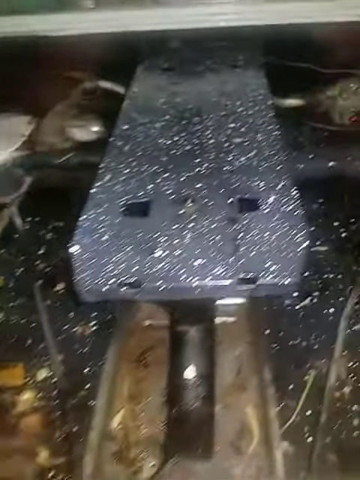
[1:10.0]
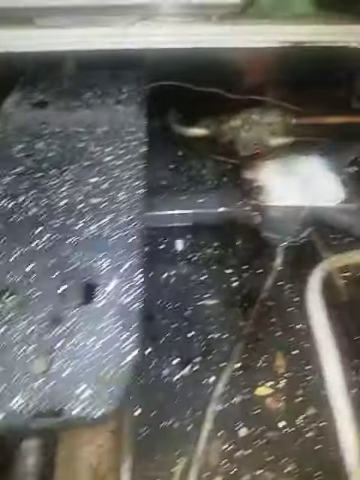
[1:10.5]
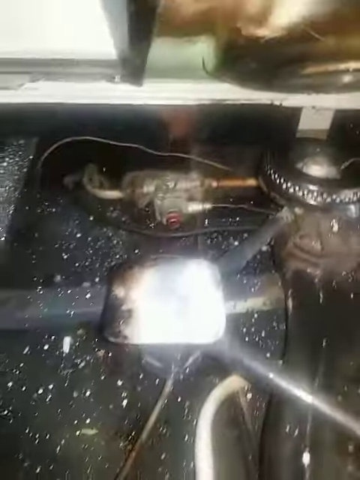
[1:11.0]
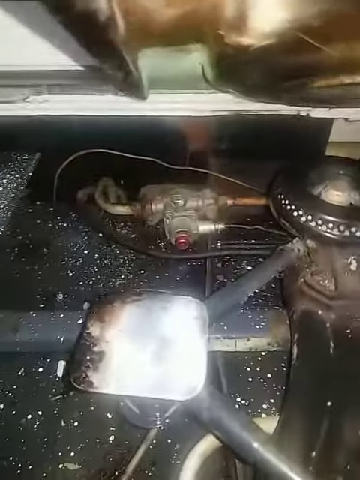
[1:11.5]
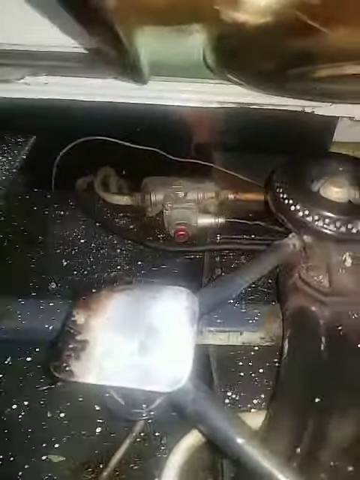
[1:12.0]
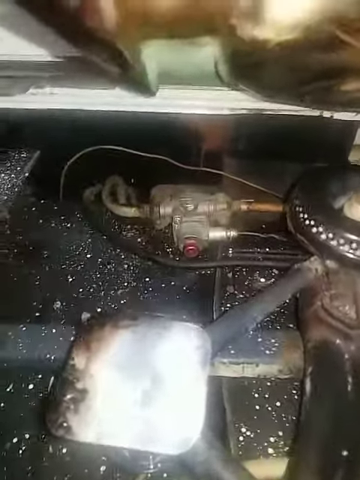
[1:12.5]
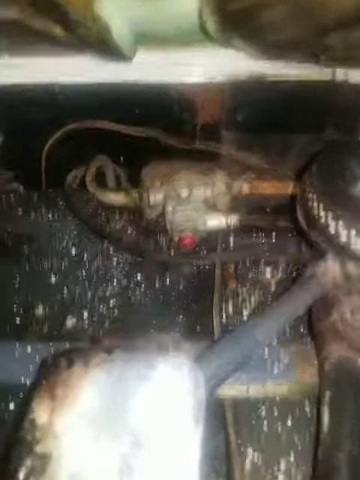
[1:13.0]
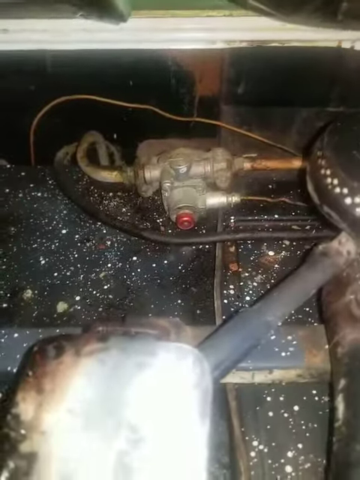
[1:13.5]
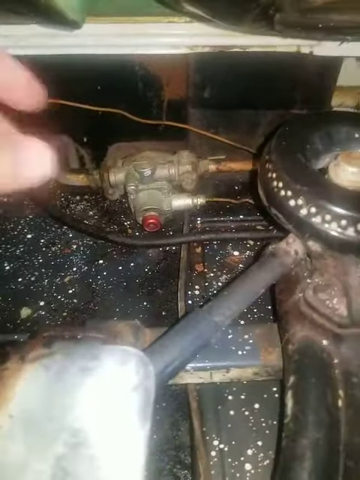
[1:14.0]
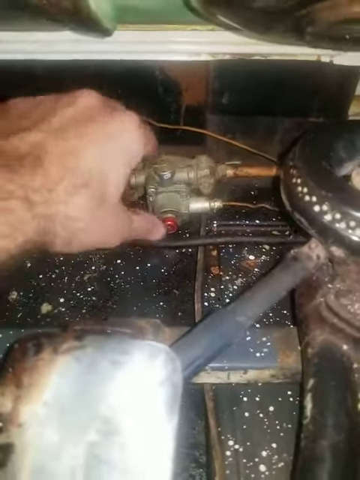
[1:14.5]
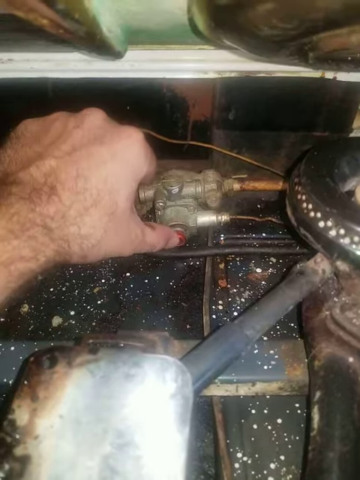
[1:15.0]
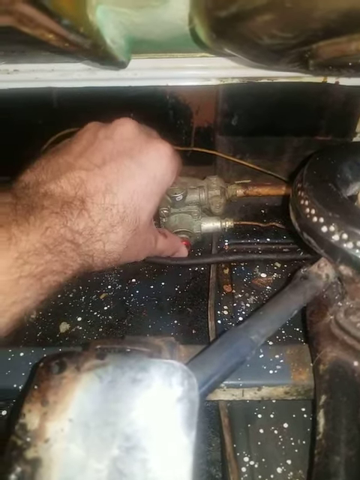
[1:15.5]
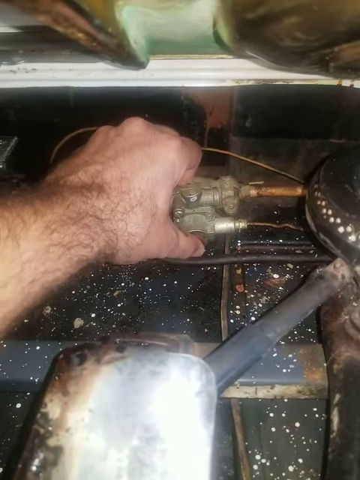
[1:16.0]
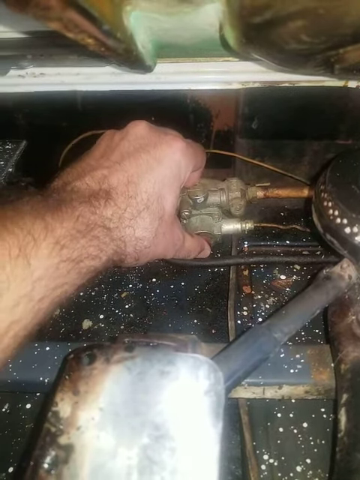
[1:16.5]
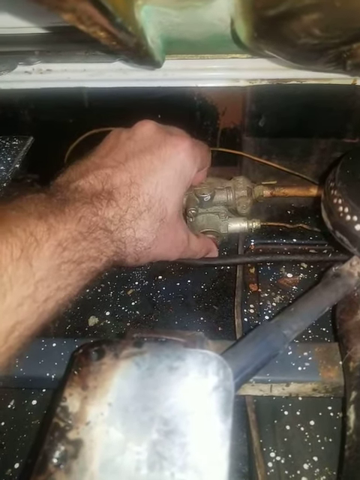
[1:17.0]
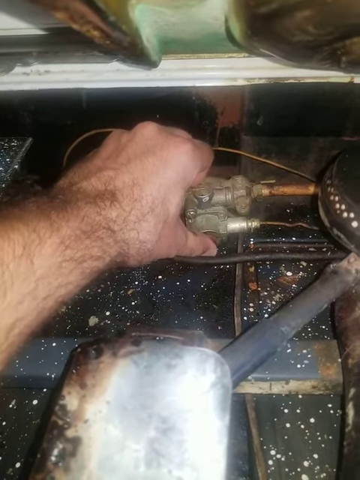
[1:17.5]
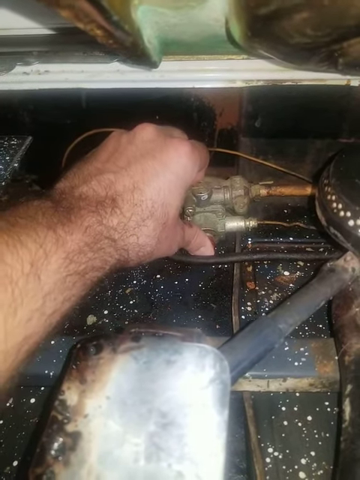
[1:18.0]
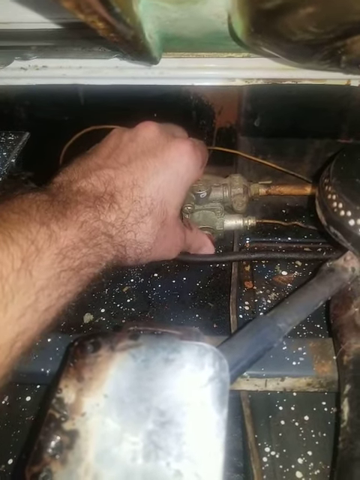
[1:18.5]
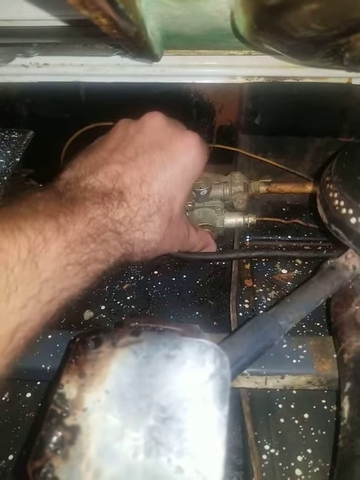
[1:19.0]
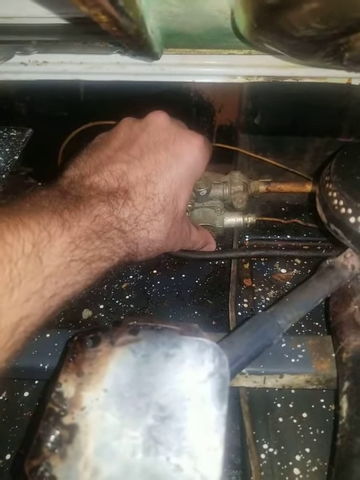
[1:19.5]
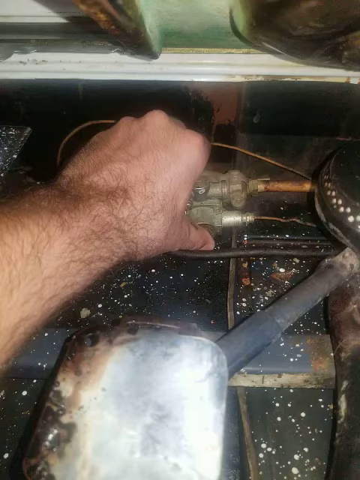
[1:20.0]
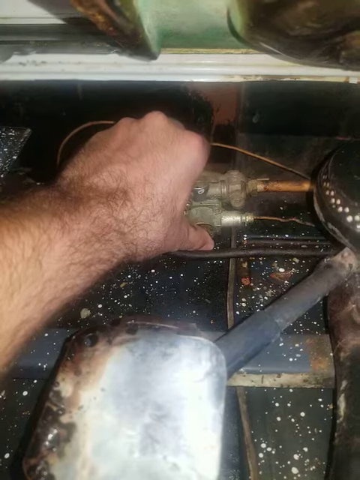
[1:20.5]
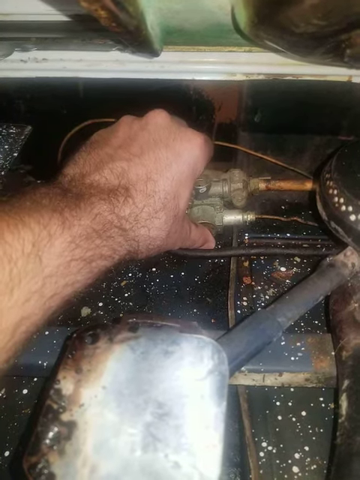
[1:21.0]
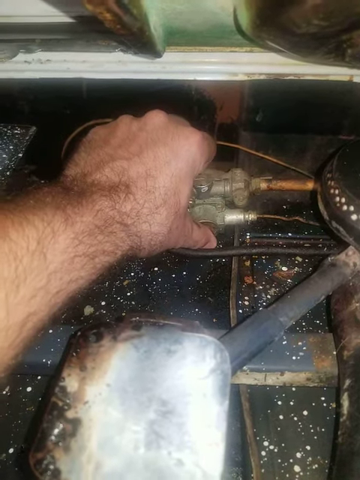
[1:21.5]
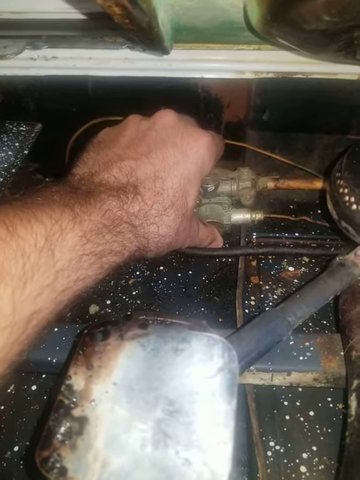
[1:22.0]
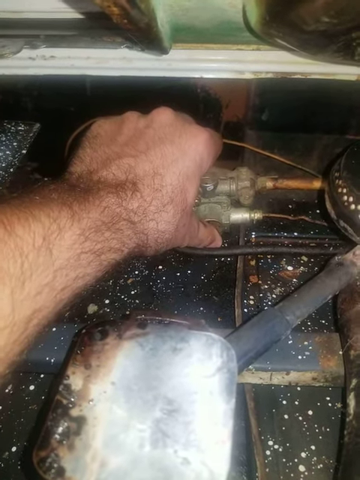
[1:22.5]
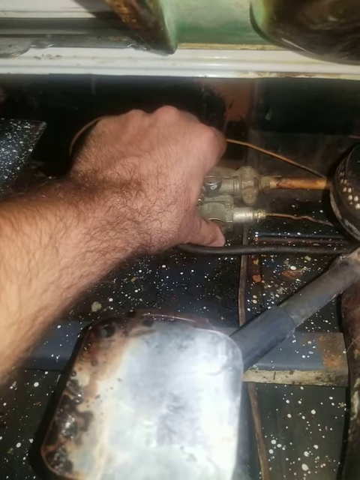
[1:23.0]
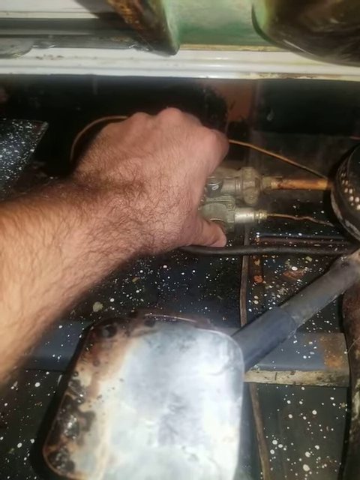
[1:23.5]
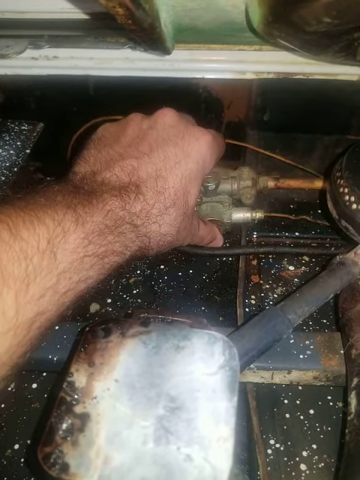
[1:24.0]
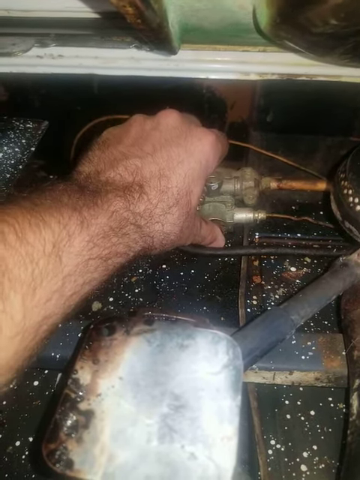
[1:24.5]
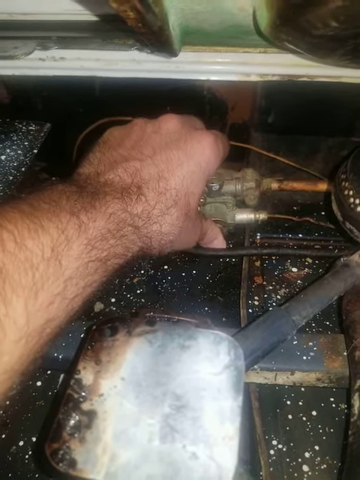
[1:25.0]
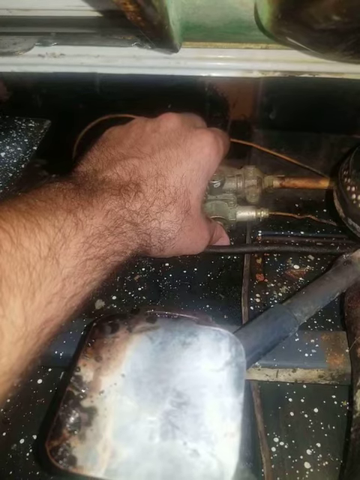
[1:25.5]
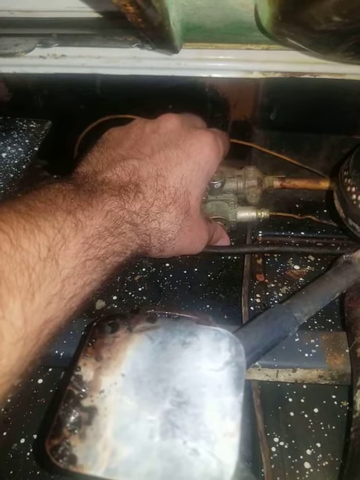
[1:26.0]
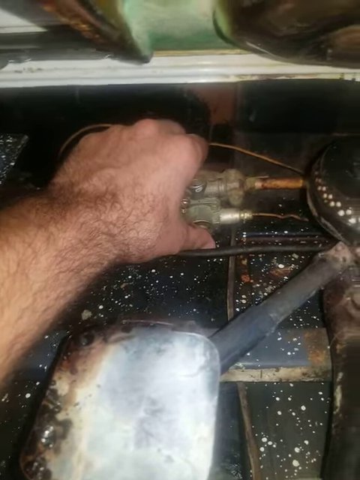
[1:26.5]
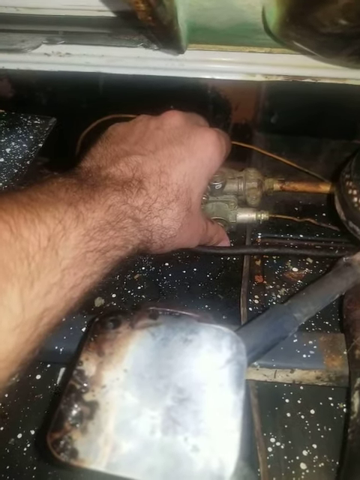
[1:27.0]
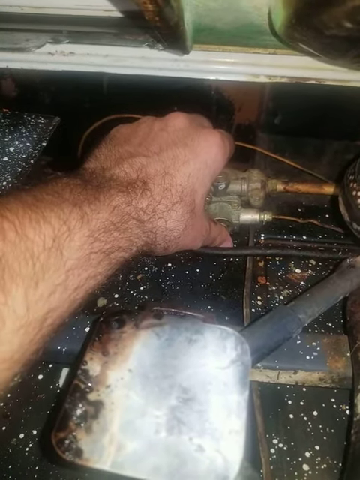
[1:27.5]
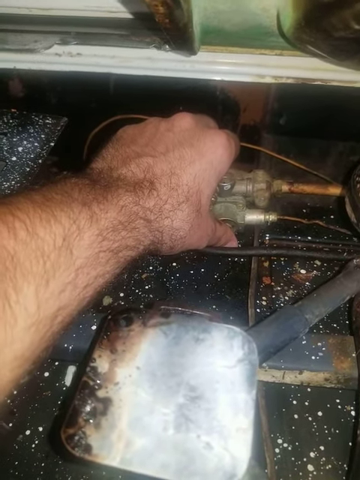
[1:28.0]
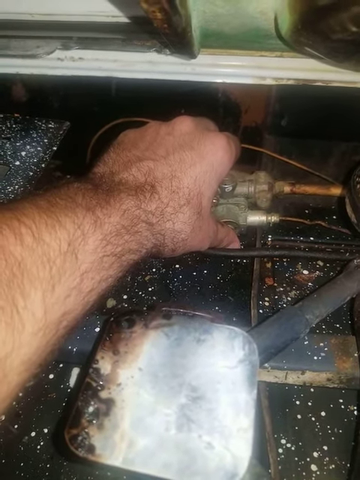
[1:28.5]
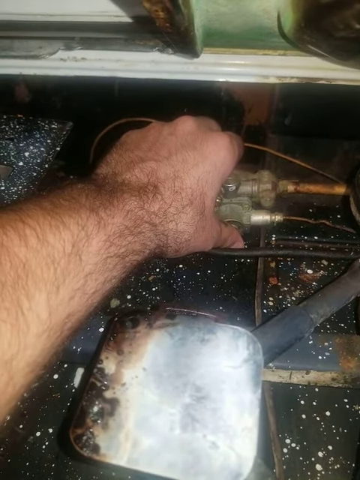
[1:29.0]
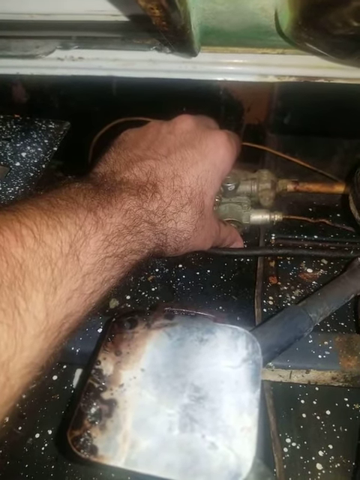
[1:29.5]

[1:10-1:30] The camera moves into the mechanisms of the disassembled stoves and zooms in on a metal piece with a red button. A hand, apparently of a white man, appears; the hand and arm look quite hairy. He pushes the red button with his bare hand and keeps pushing it, seemingly to test whether it works. In the background of the disassembled stoves, everything looks rusty, some parts seem burned, and it appears dirty.